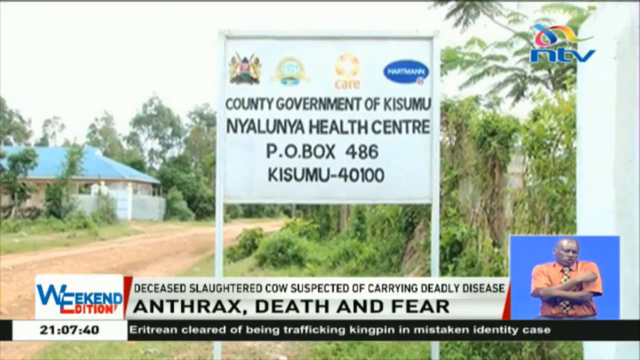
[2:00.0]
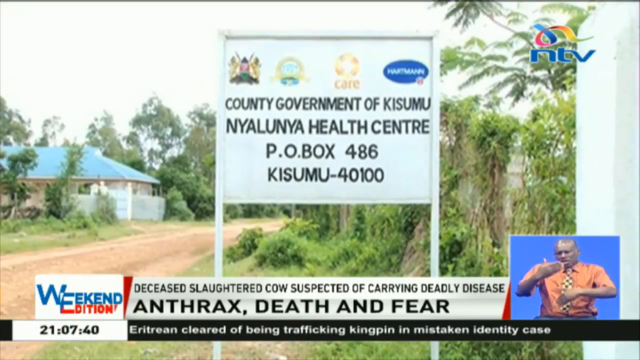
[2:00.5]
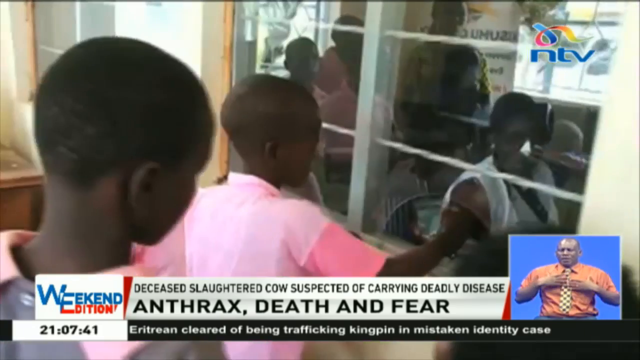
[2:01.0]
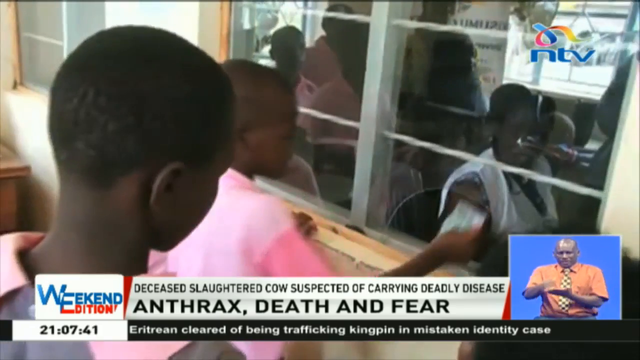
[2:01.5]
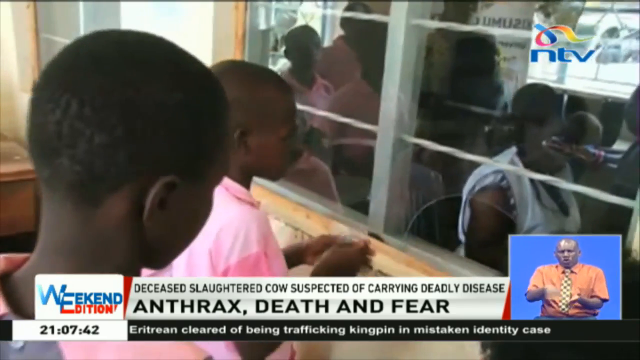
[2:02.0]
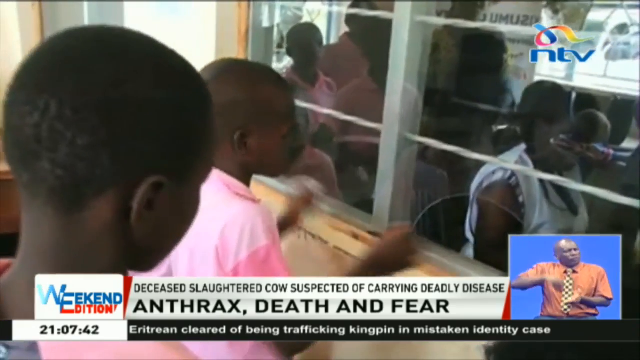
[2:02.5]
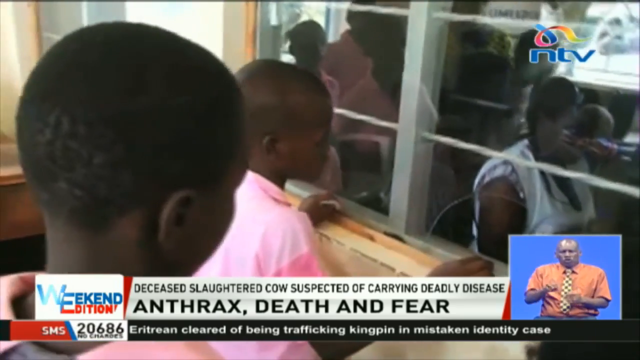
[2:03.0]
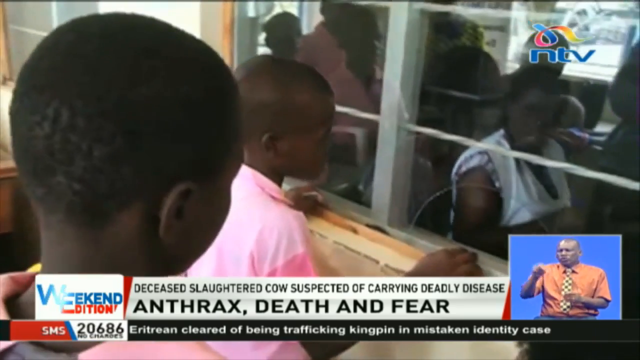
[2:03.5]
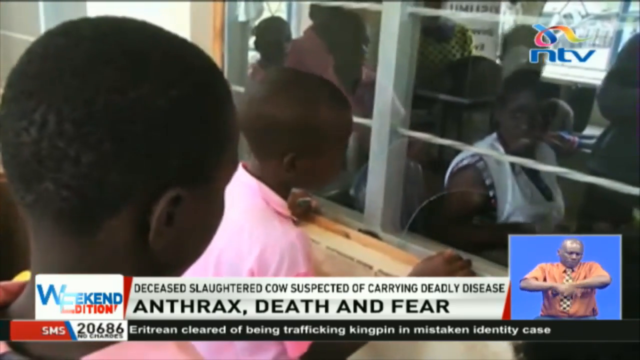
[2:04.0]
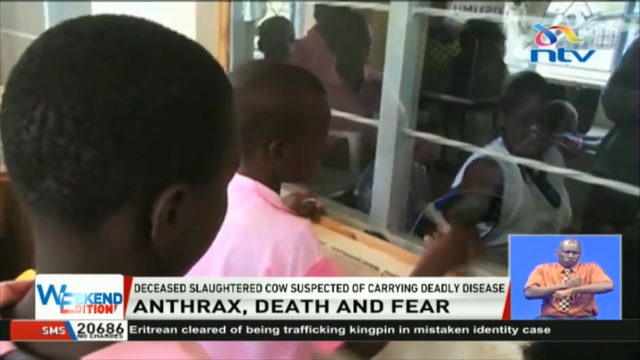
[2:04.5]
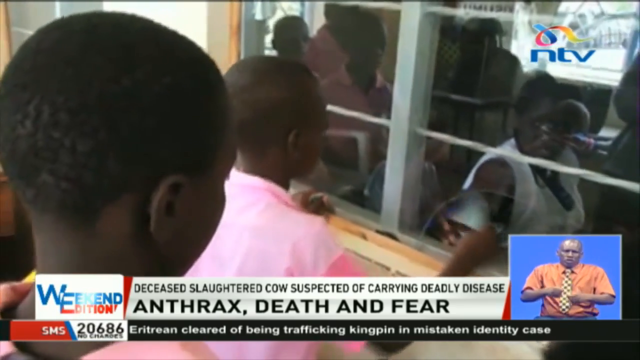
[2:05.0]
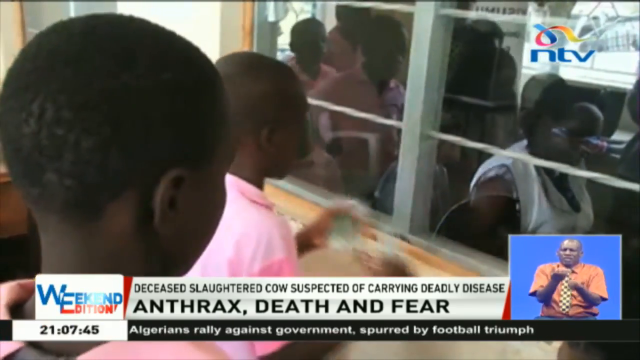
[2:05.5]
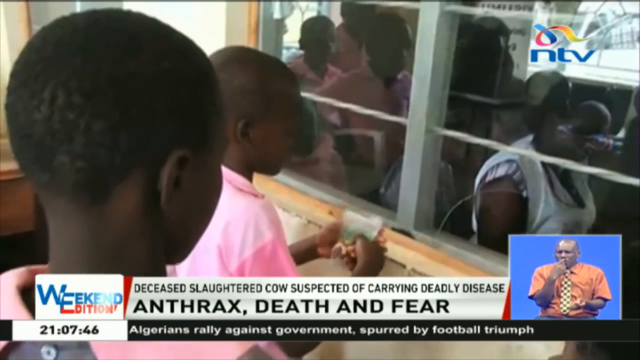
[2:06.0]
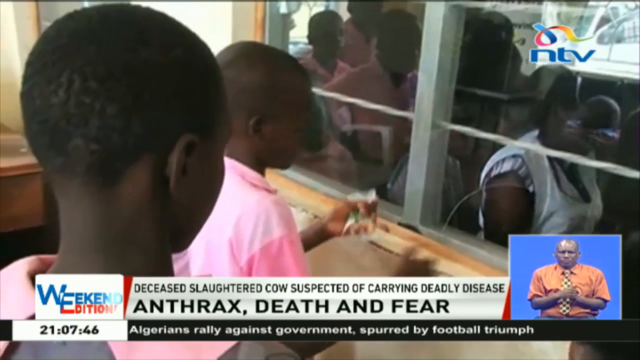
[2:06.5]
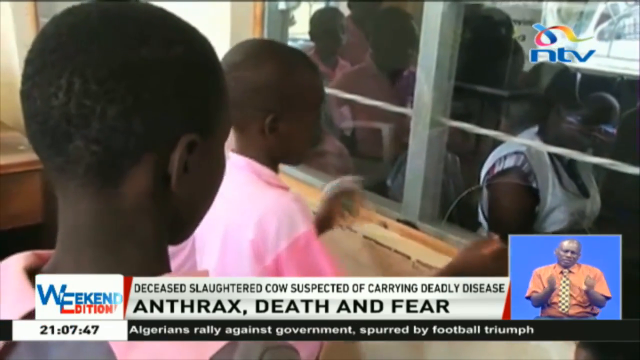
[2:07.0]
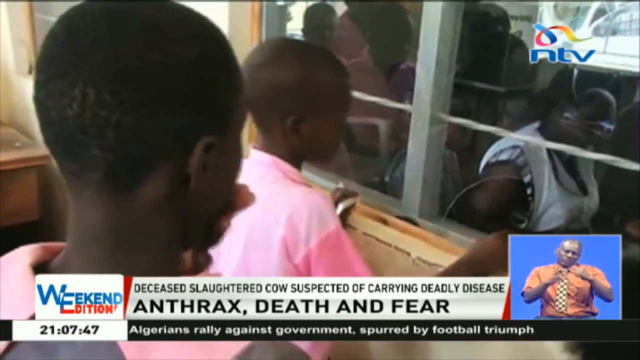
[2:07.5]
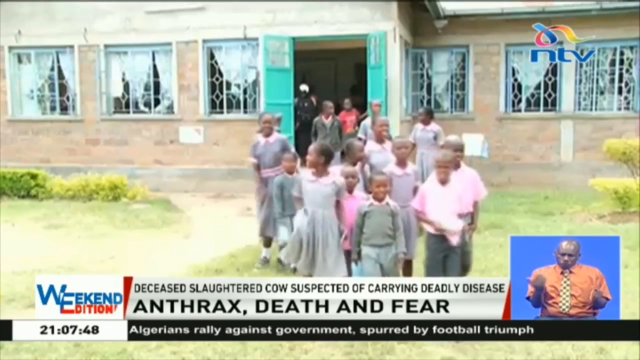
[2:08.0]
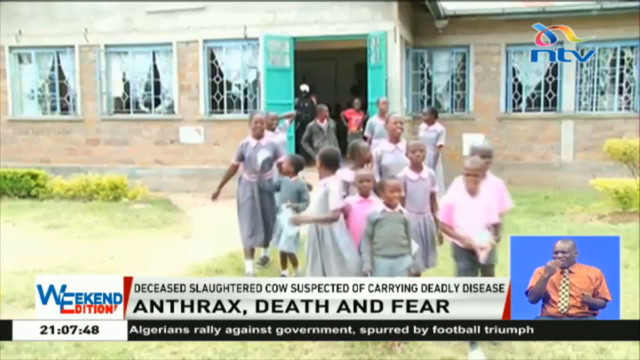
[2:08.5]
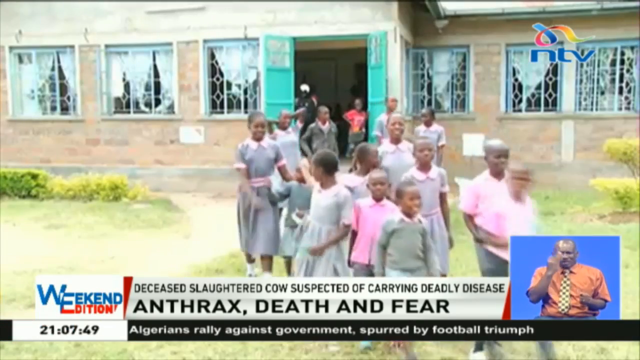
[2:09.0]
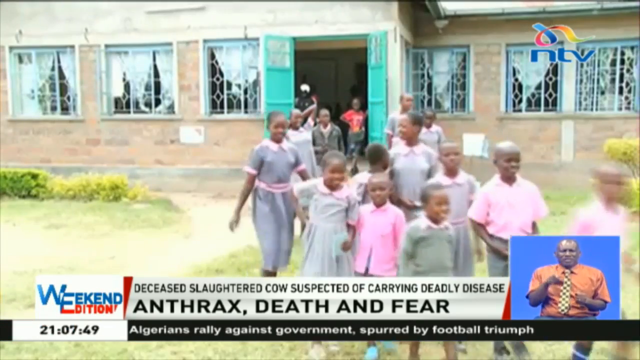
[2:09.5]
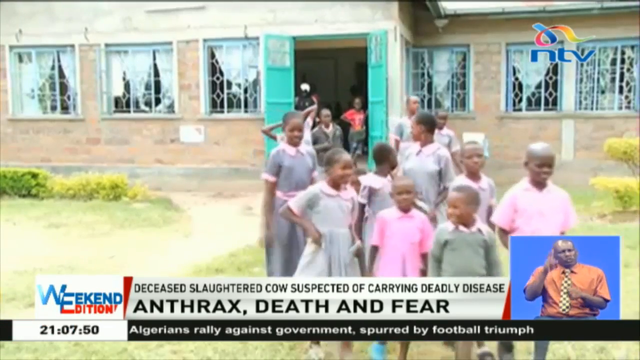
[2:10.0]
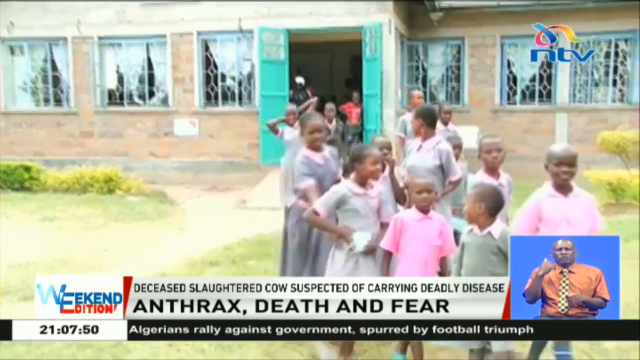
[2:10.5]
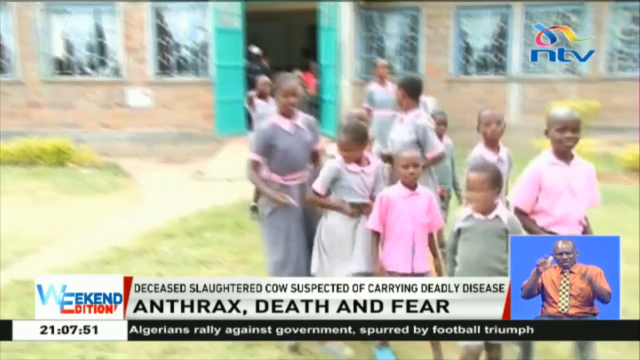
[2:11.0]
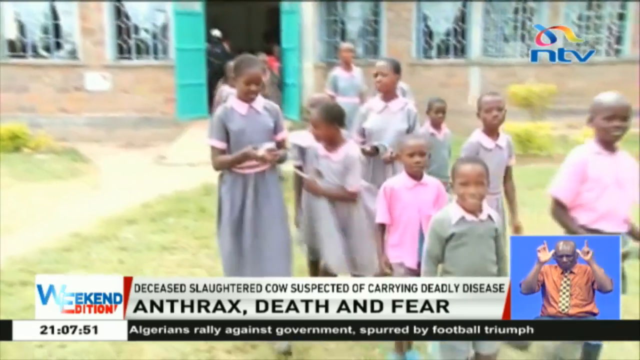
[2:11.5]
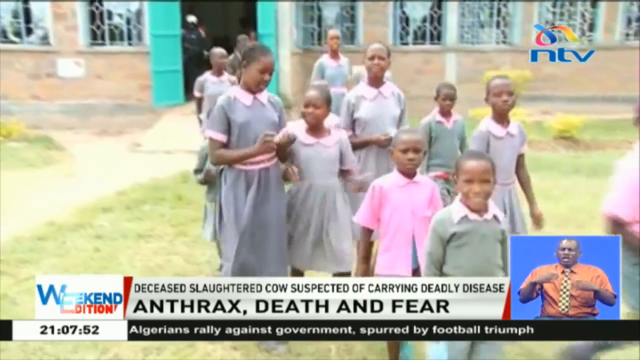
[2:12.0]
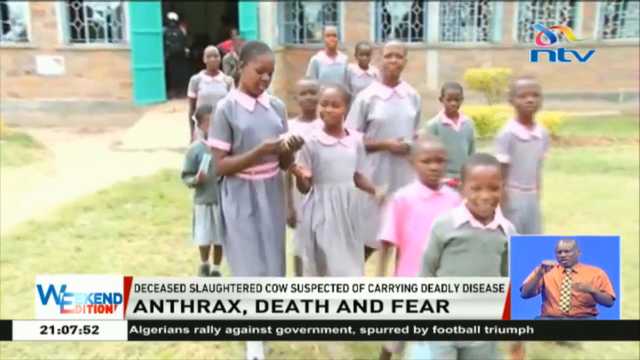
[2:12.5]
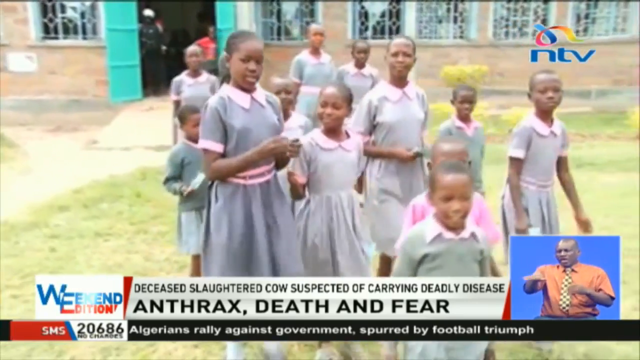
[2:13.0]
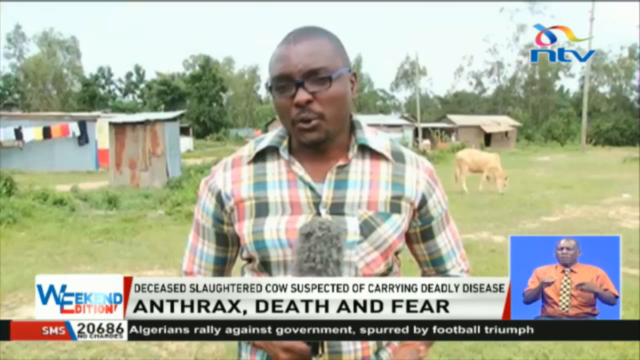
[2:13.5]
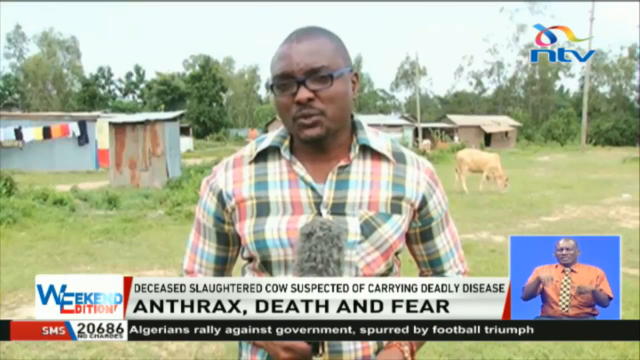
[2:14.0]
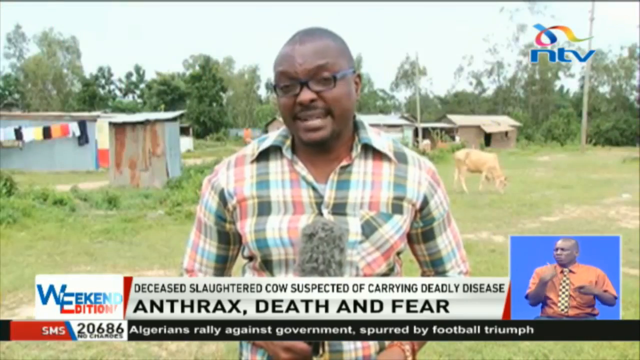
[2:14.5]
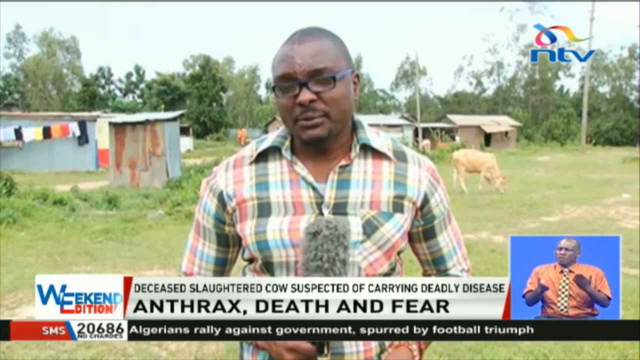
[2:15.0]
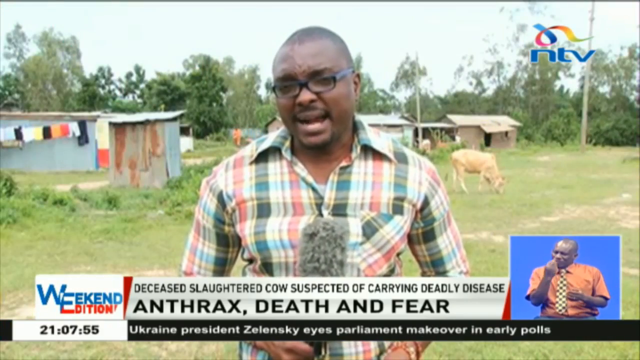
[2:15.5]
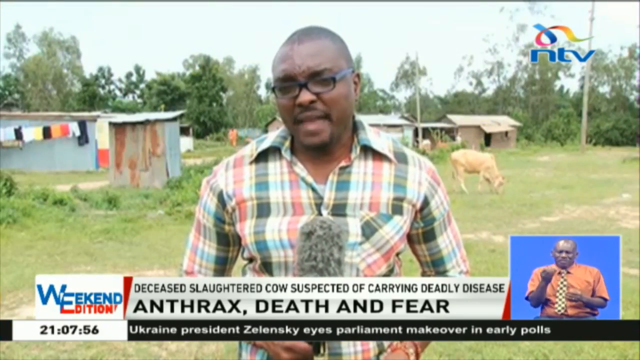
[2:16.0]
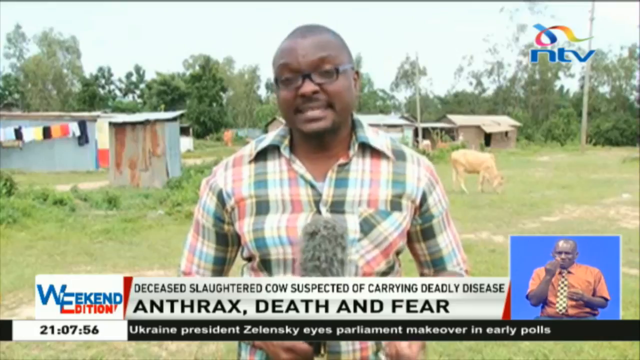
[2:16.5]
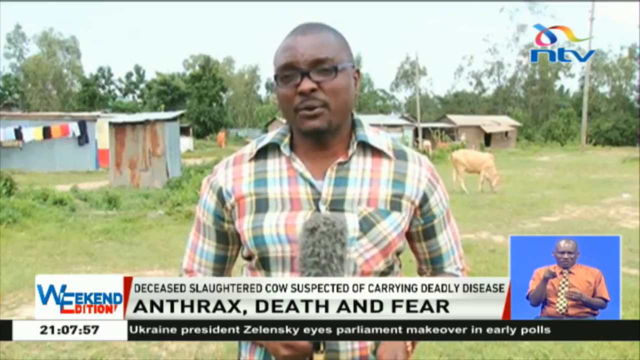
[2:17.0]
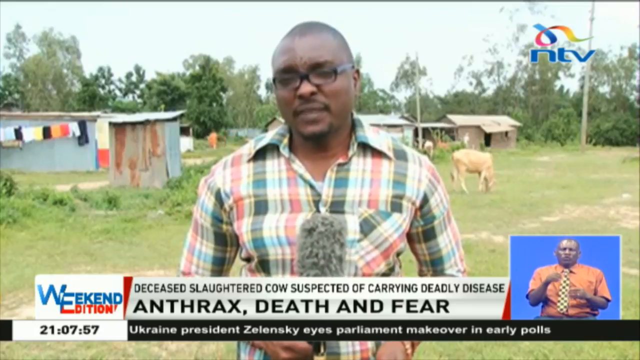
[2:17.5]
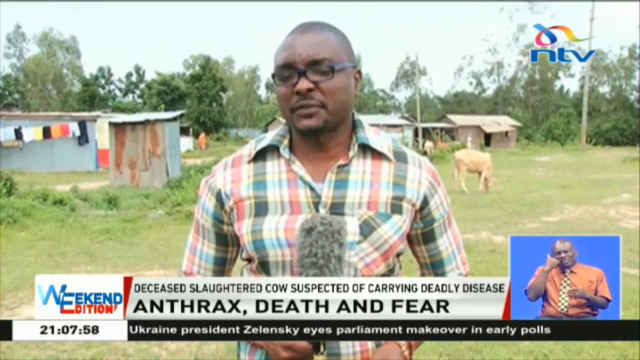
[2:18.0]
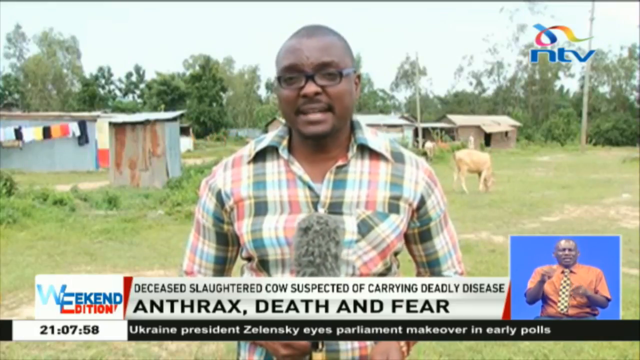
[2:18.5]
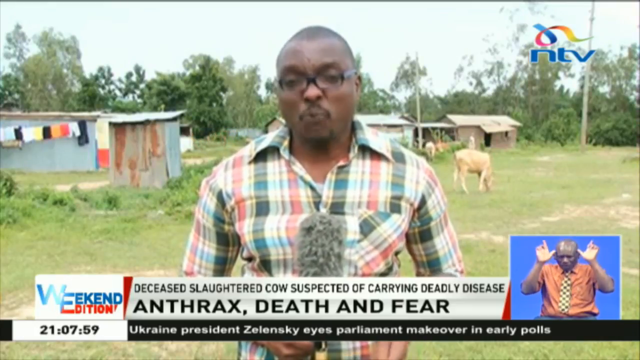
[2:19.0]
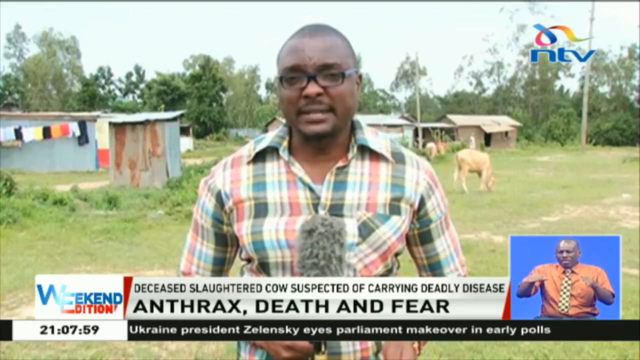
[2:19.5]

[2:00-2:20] A large white square sign has a few different logos at the top and black text underneath reading "County Government of Kisumu, Nyalunya Health Center, PO Box 486, Kisumu-40100". It is in an area with a dirt path to the left, some small buildings in the background and lots of green trees and shrubs. In another scene, some small African children appear to be at a window where a woman is sitting; one of the kids seems to hand her something and she gives them some kind of paper in return. The scene changes to a group of young African children leaving a small tan brick building with teal-colored doors; most of them appear to be young girls, most have shaved heads, and they look happy as they kind of walk away from the building. Then a male African reporter in black-framed glasses and a button-up shirt with a white, black, blue and red flannel design speaks to the camera, standing in an area with kind of a grassy field behind him, some small run-down-looking houses, and cows grazing in the grass.